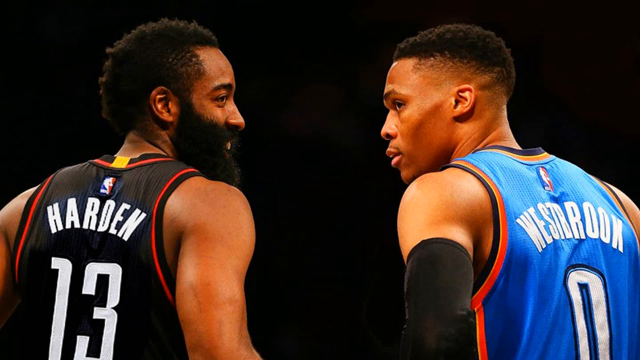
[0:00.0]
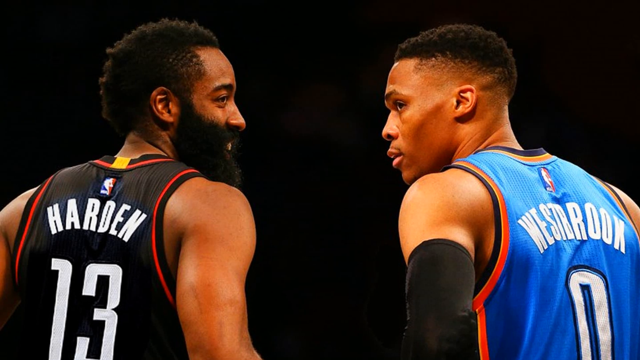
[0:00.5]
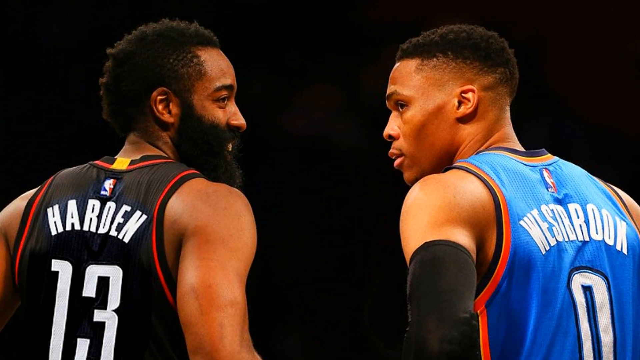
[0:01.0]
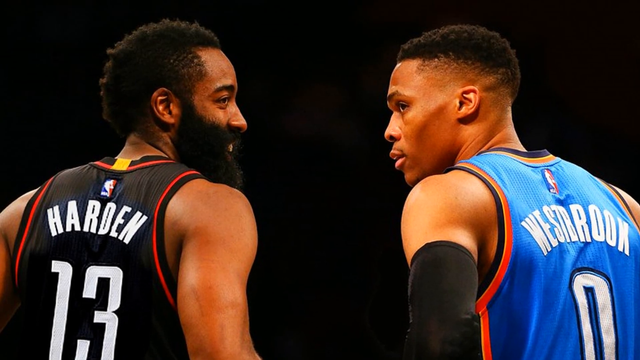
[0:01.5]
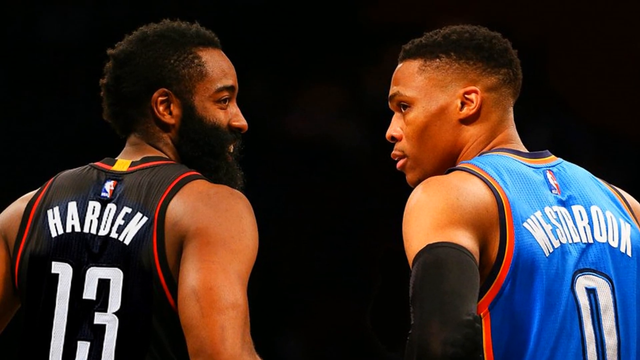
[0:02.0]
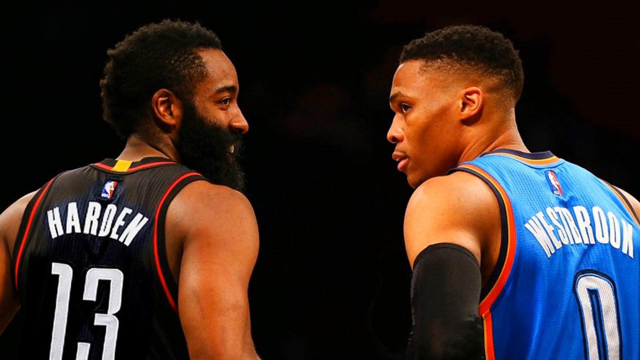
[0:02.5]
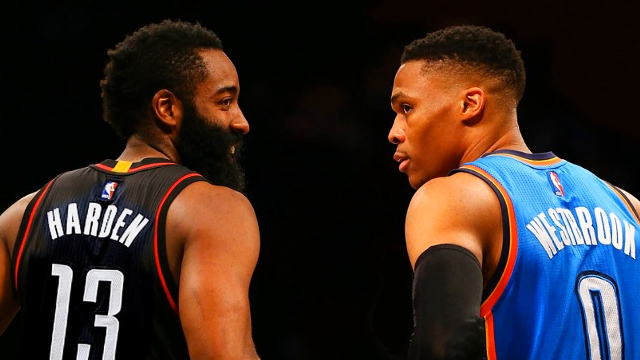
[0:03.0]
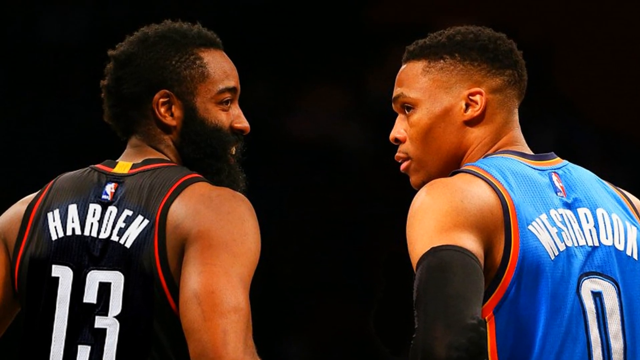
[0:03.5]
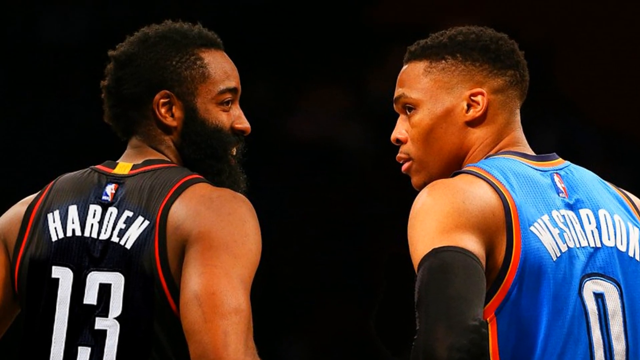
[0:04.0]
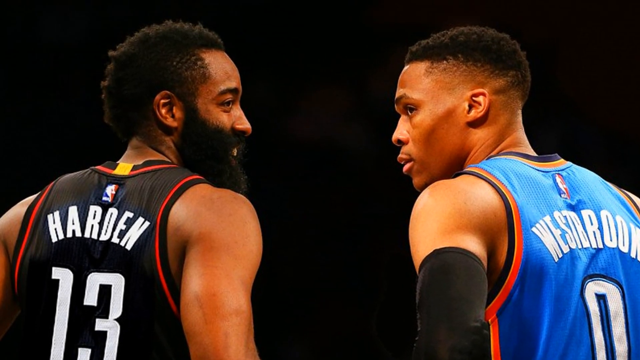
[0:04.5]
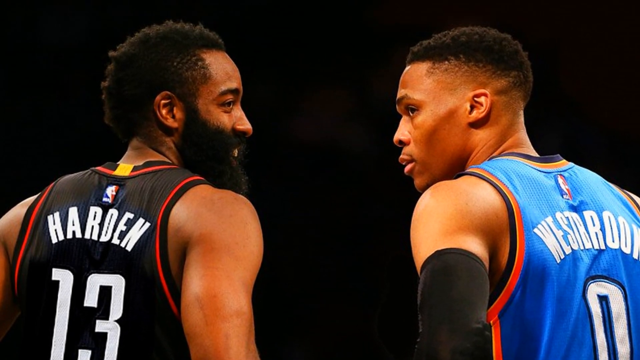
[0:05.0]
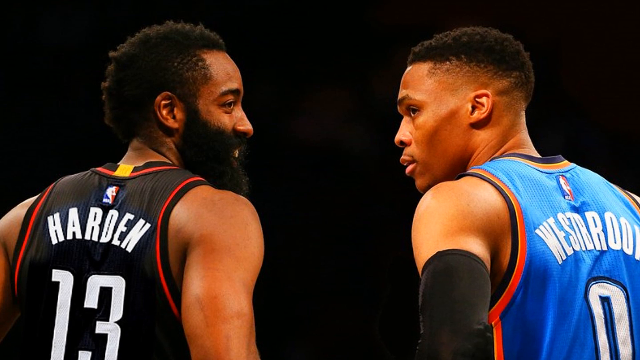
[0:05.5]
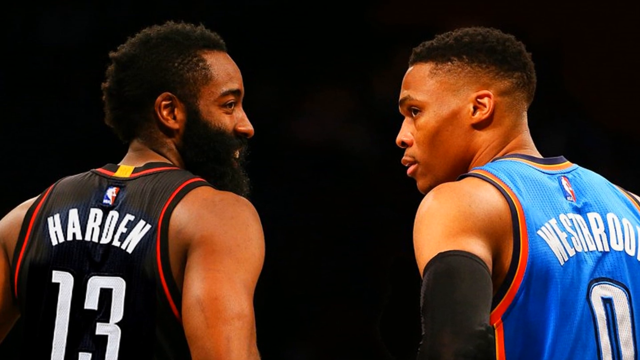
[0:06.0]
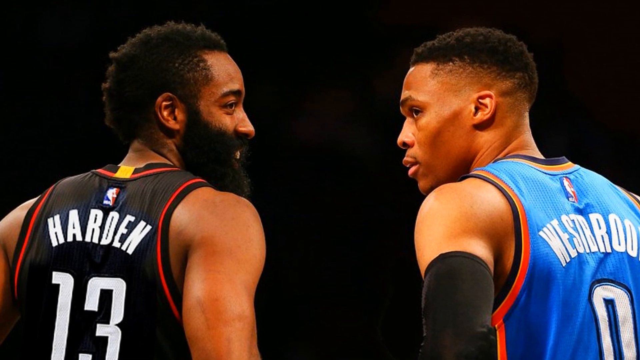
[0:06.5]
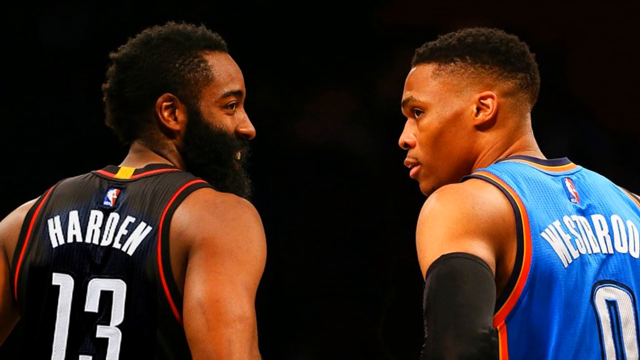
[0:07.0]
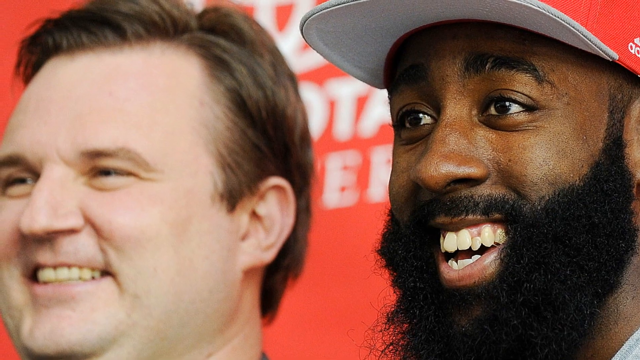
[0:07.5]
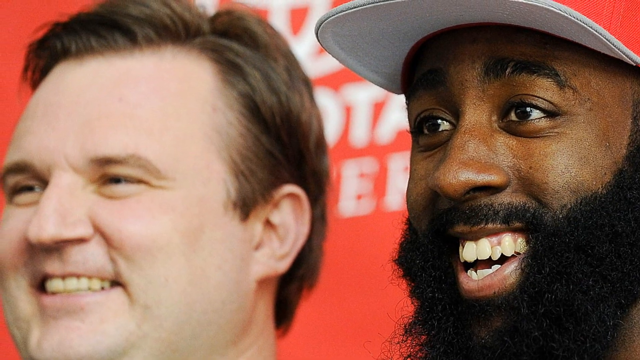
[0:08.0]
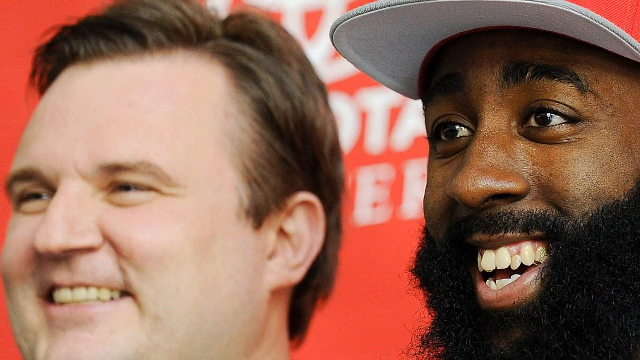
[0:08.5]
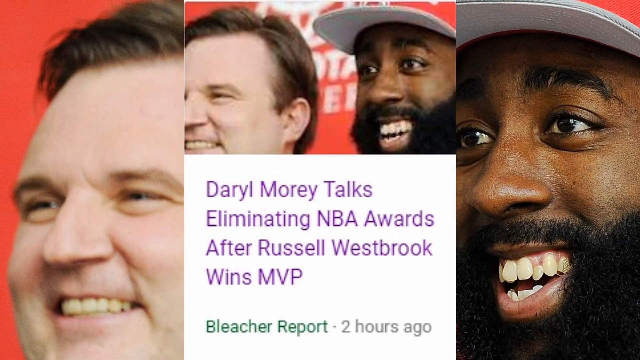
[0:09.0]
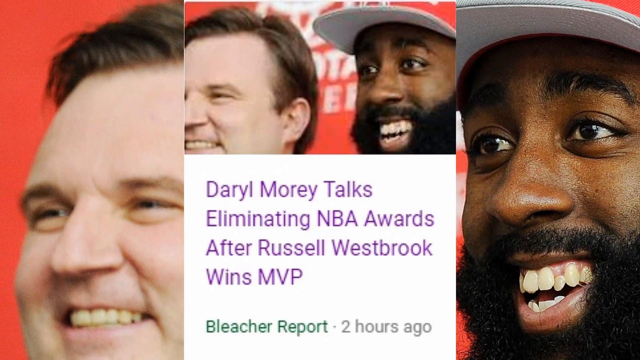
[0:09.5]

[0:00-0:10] Two basketball players appear side by side, James Harden on the left and Russell Westbrook on the right. The video quickly transitions to another scene showing a different pair of basketball players, one African American and the other Caucasian. The images appear in quick succession as still shots rather than moving footage.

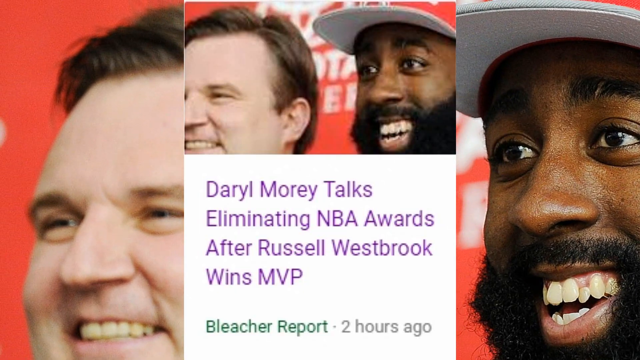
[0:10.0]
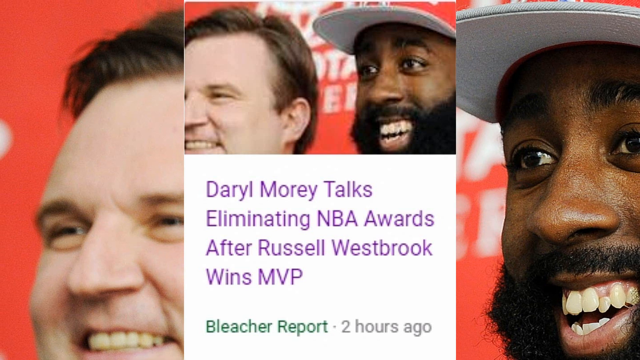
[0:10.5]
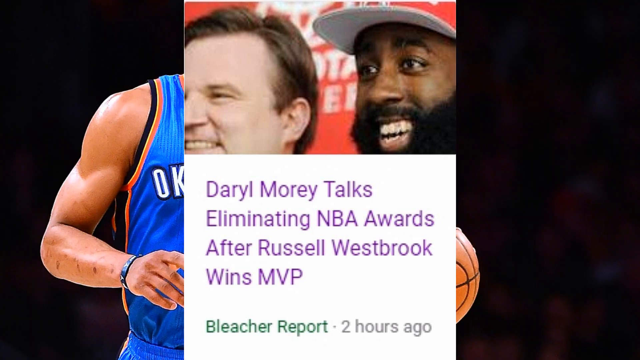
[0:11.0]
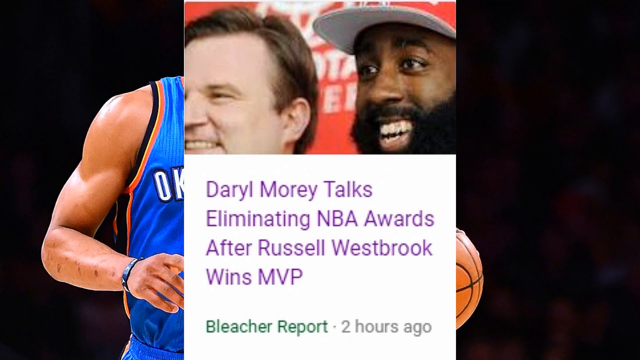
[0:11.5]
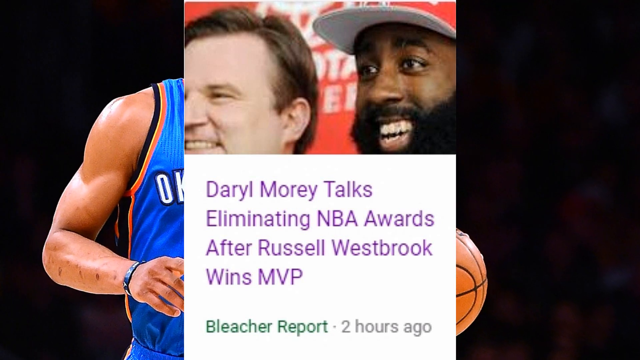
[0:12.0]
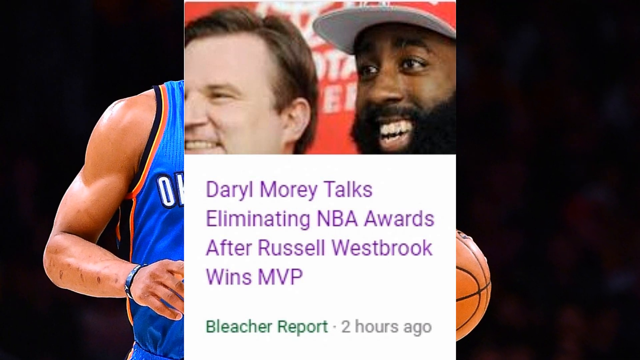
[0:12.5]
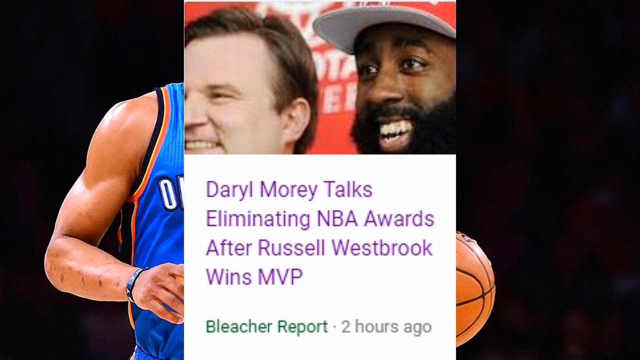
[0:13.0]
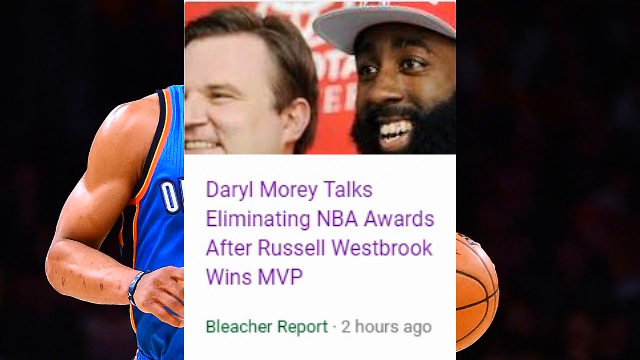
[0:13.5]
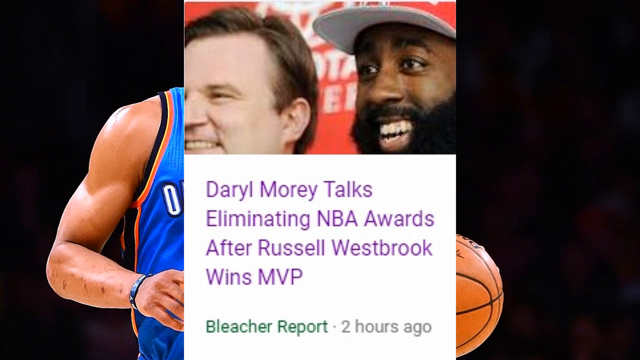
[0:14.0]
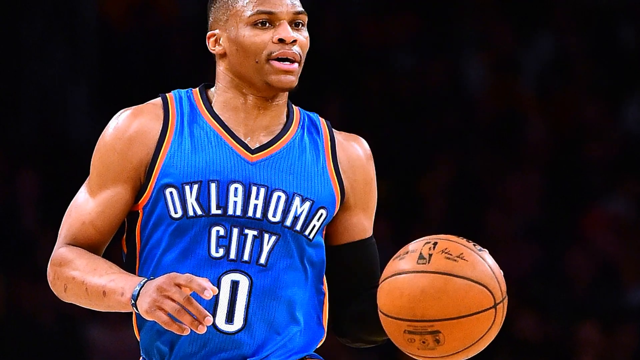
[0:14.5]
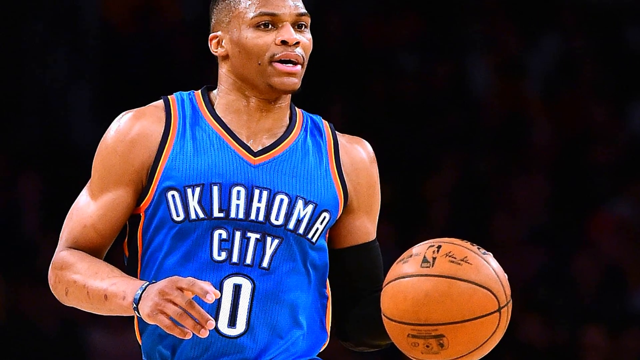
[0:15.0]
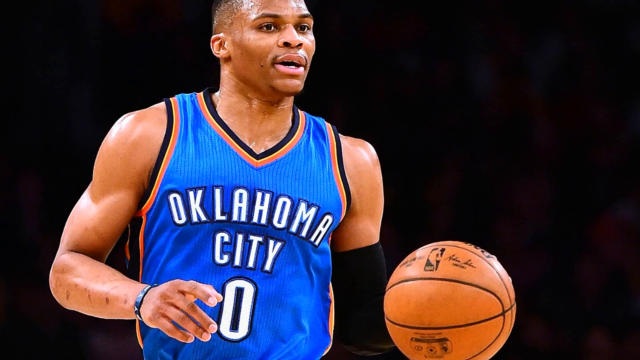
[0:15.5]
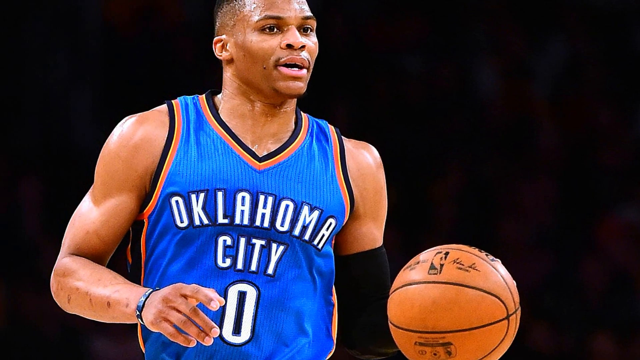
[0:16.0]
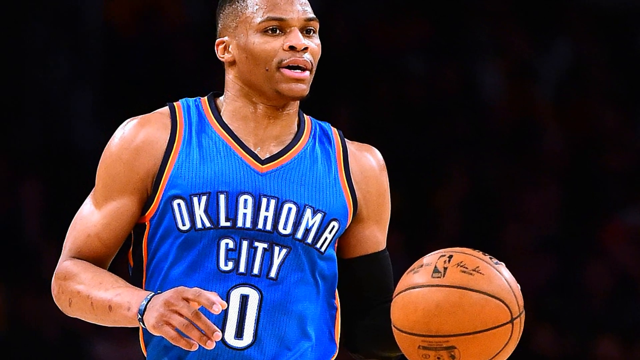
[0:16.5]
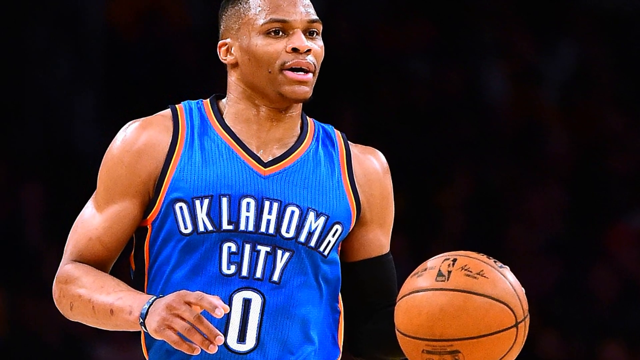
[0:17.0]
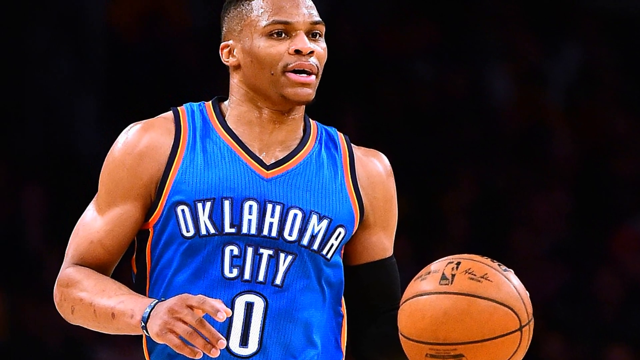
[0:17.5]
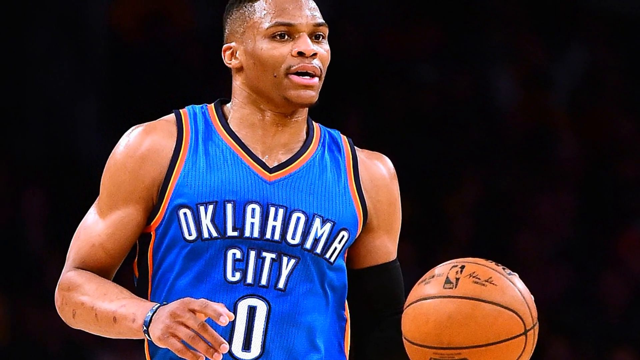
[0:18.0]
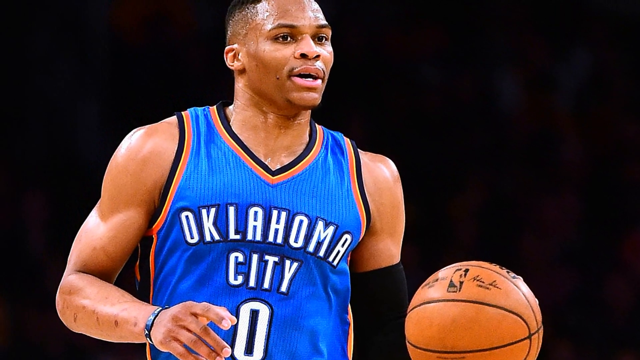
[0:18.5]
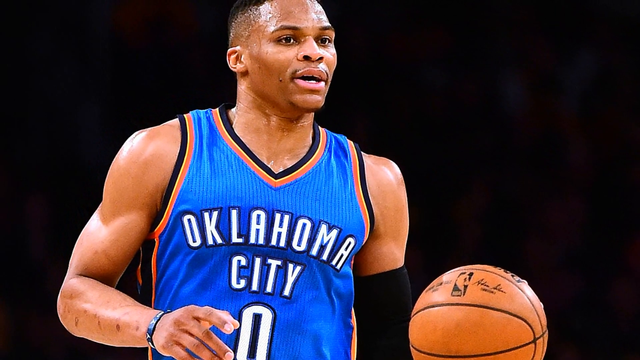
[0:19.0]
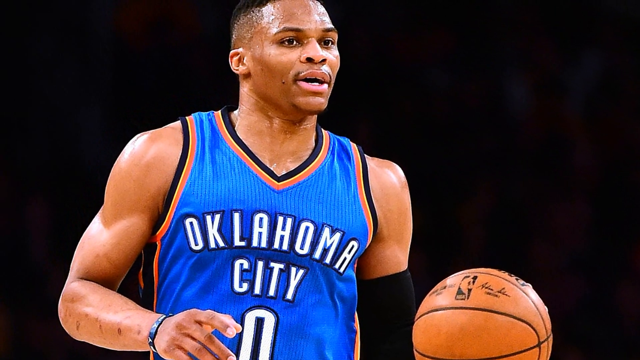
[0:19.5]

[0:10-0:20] On-screen text reads "Darryl Morey talks about winning NBA awards after Russell Westbrook wins MVP." Russell Westbrook is shown playing, dribbling a basketball and looking very passionate. He is in front of a background that leaves only him visible, with nothing behind him to be seen. The video then shows James Harden and another, Caucasian person in front of an orange background.